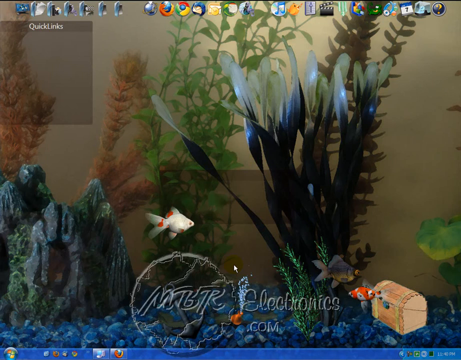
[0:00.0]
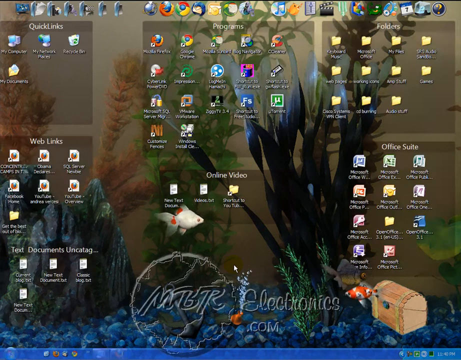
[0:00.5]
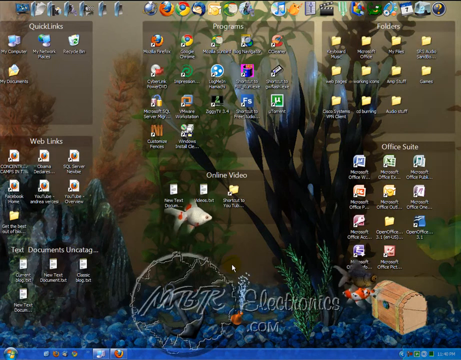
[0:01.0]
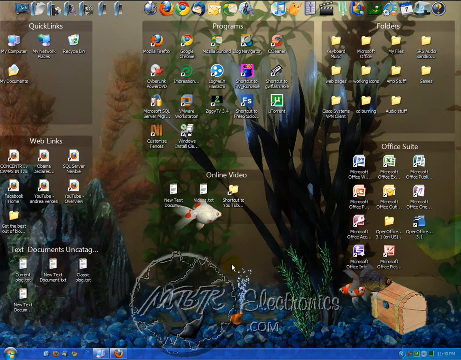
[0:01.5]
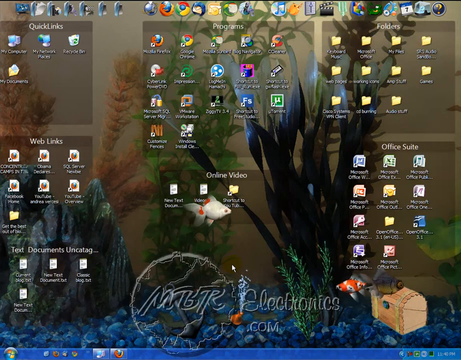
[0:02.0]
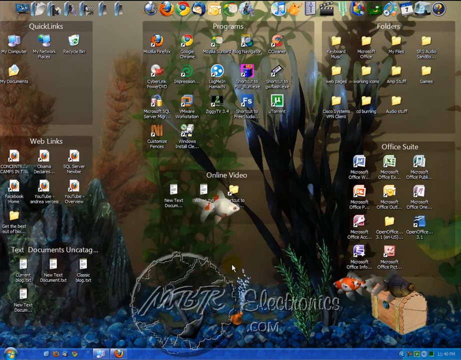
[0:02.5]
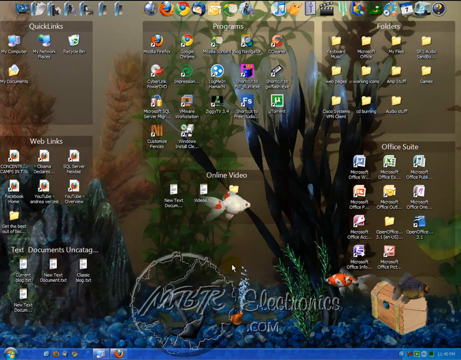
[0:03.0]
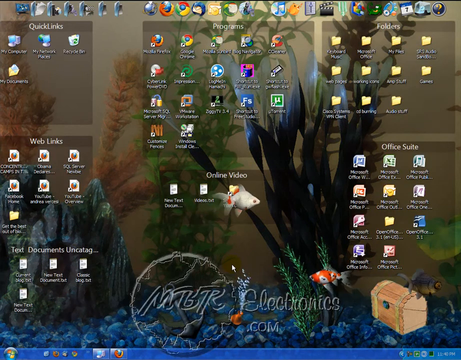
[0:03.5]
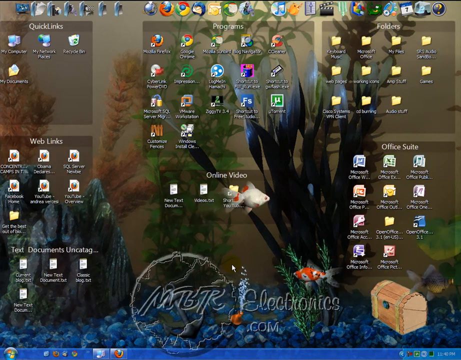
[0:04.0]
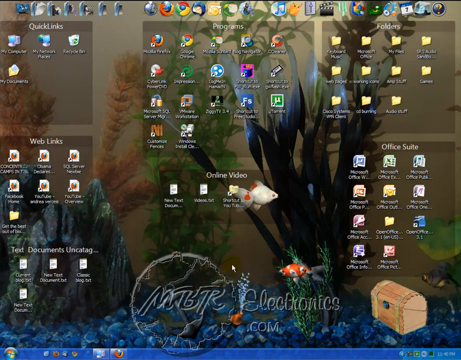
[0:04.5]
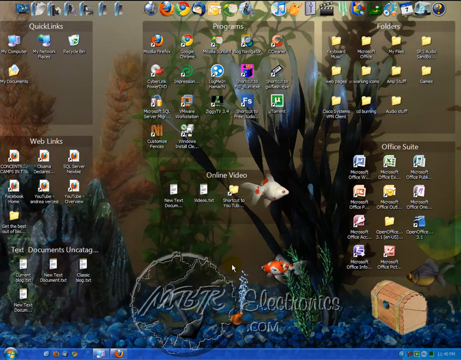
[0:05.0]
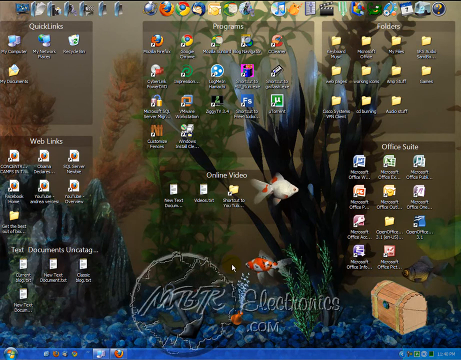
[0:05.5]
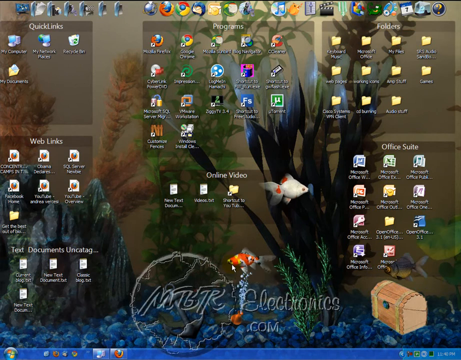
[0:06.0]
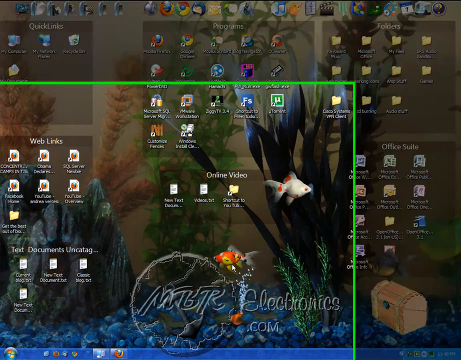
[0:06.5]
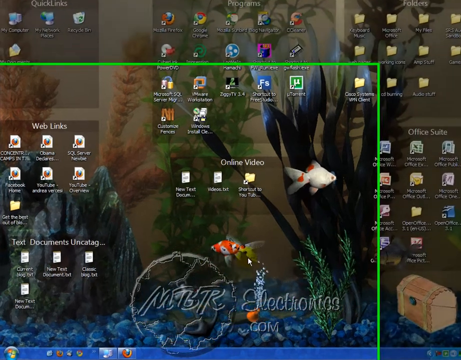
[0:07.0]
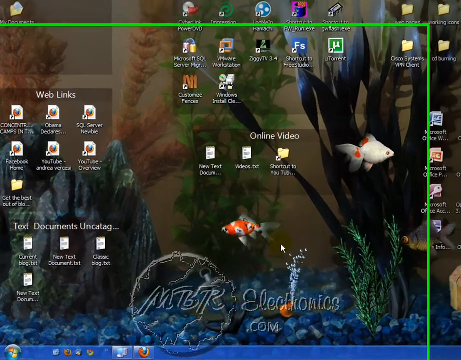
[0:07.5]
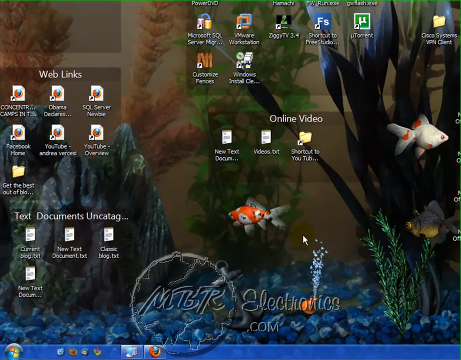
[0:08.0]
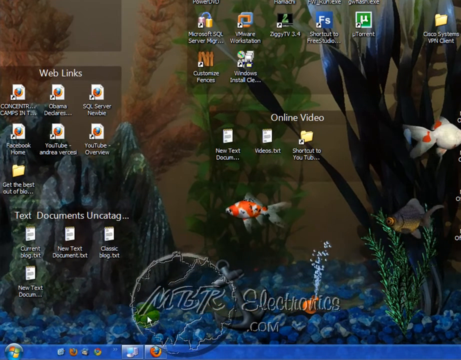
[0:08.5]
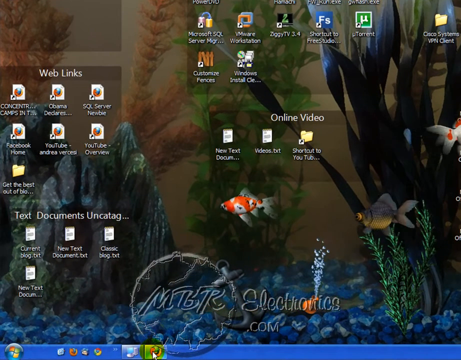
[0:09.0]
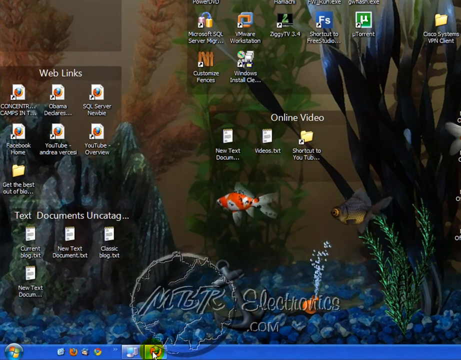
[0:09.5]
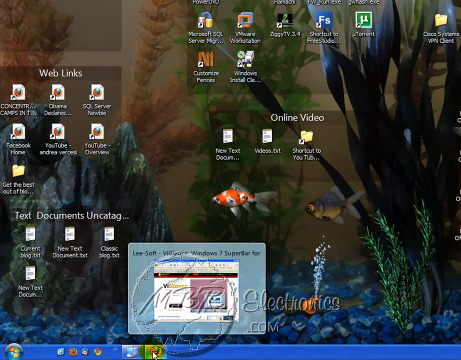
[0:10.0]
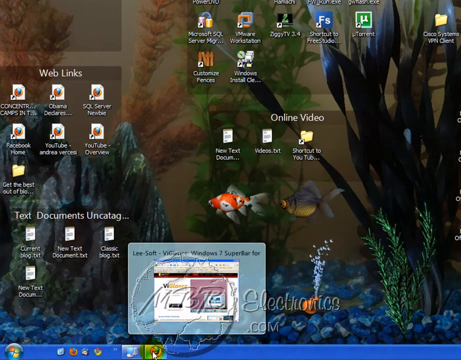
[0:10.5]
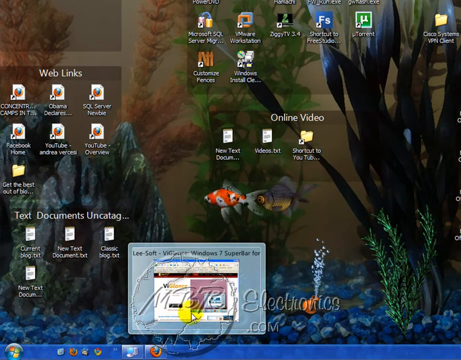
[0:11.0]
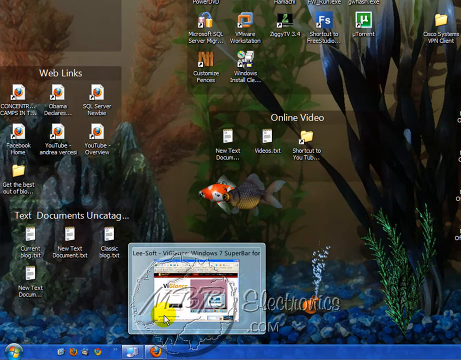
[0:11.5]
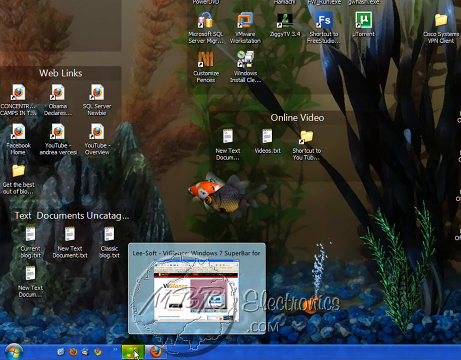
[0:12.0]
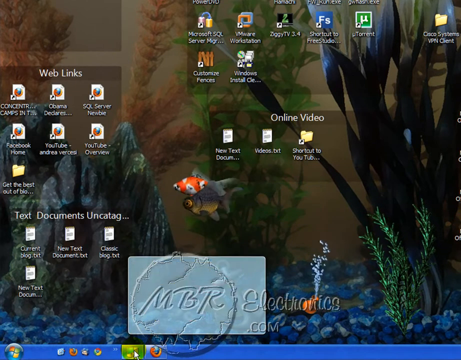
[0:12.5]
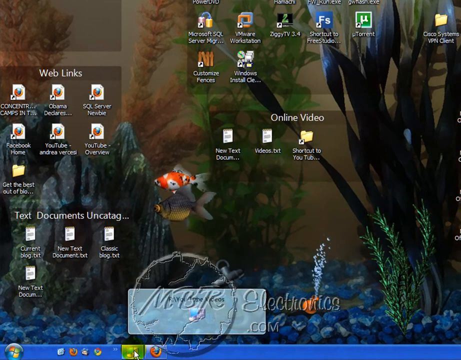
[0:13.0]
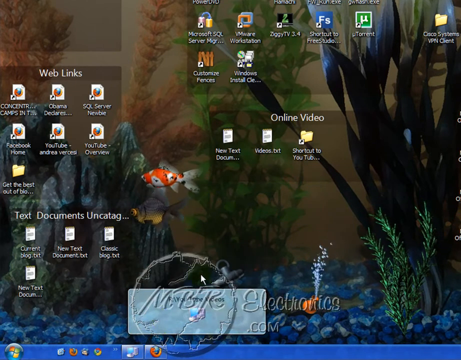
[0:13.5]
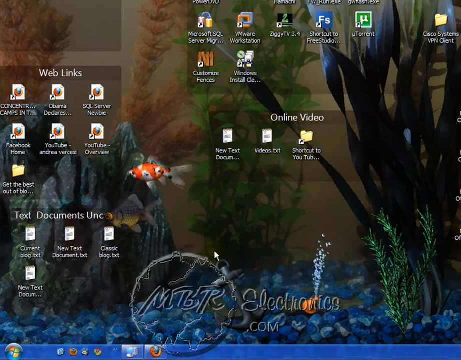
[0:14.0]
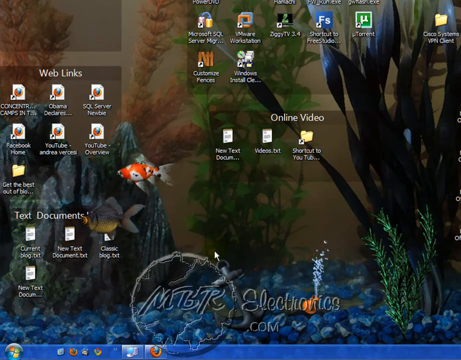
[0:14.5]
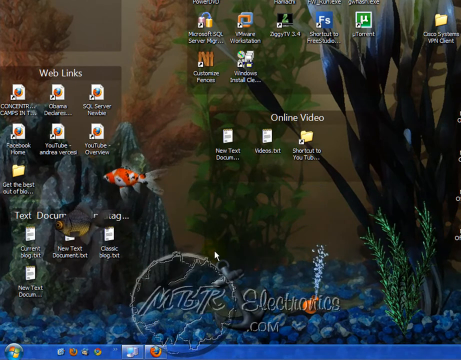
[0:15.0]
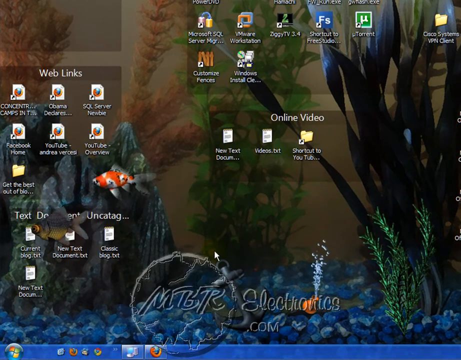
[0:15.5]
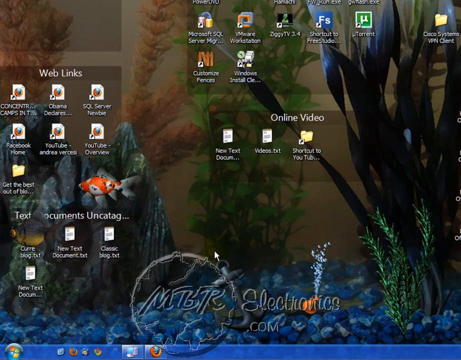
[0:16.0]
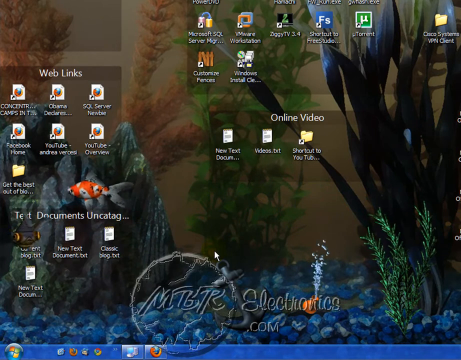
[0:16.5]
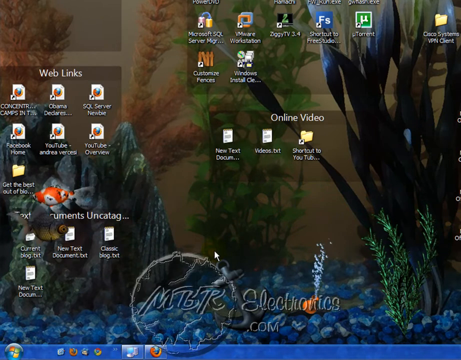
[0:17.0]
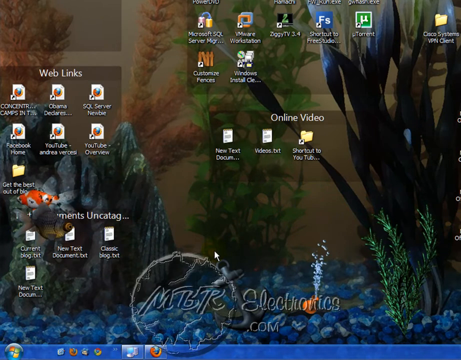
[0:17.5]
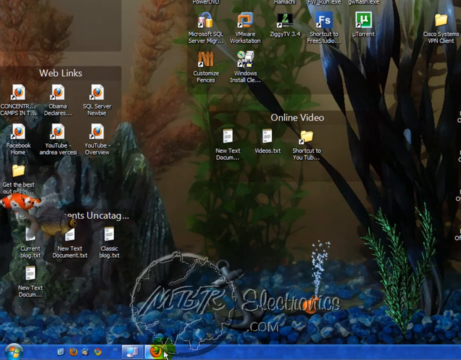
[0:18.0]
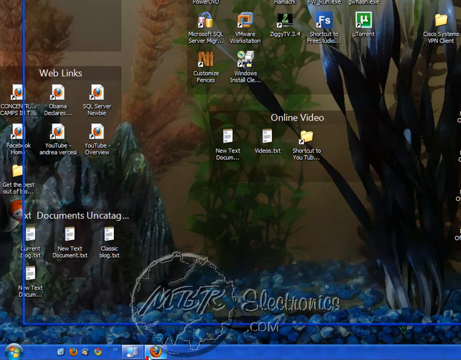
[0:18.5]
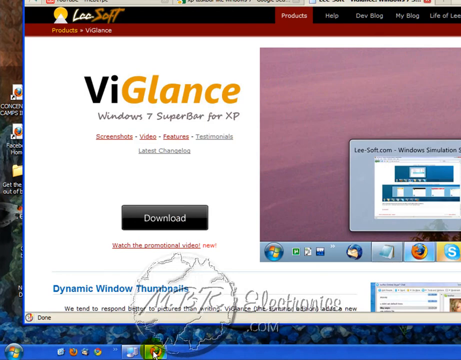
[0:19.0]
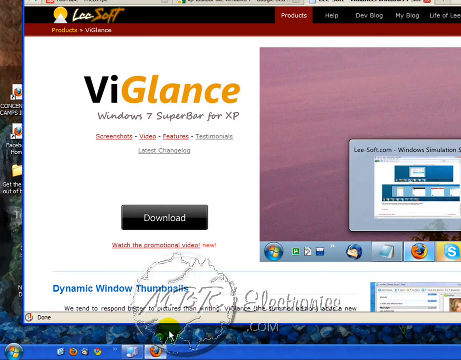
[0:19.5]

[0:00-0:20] The home screen of a laptop is displayed, and the user navigates on its wallpaper, which is a live wallpaper with many features: one is white with orange spots, another is brown, and another is orange. Many icons are on the wallpaper, and the user navigates through them, opening one that appears to be a download website or a browser. On the live wallpaper, bubbles come out from the bottom of the water. Among the visible icons are web links and quick links, along with many folders, office suites, folders of online videos, and folders of uncategorized text documents.